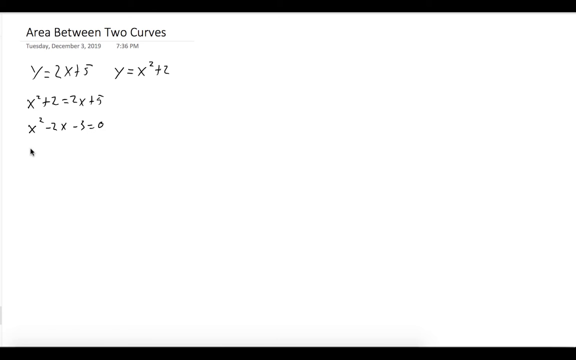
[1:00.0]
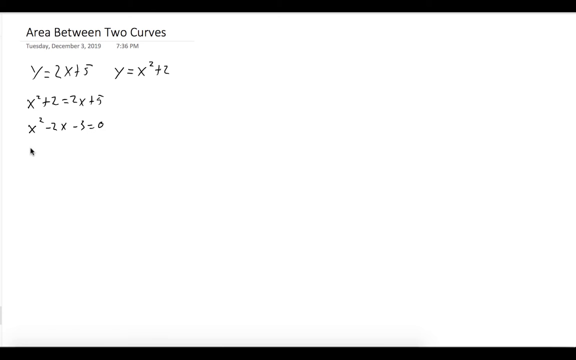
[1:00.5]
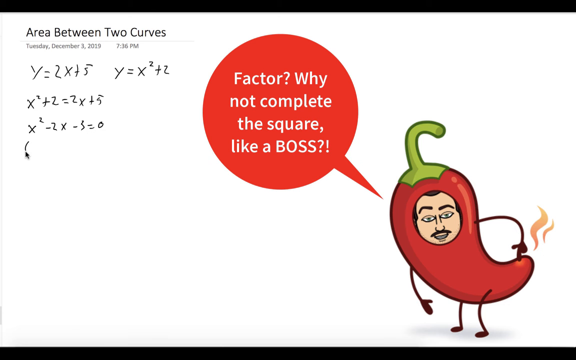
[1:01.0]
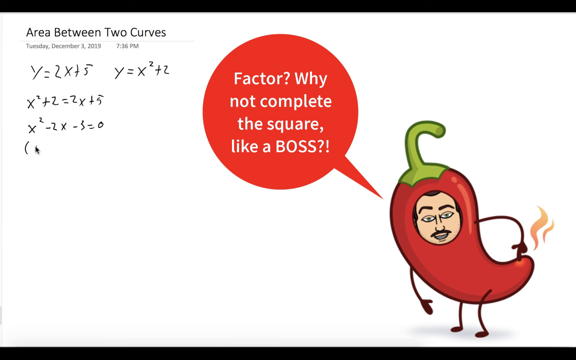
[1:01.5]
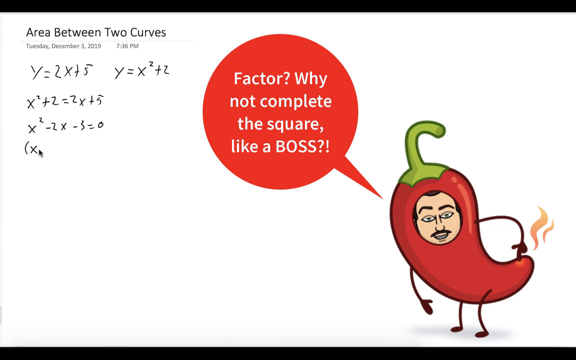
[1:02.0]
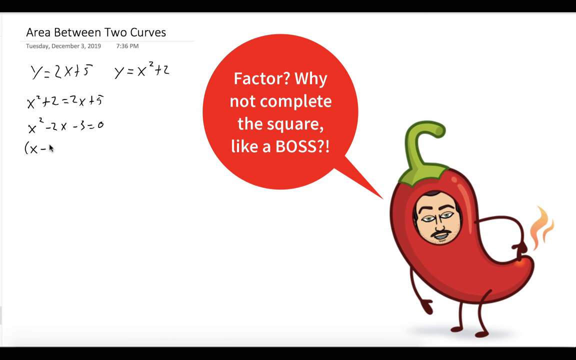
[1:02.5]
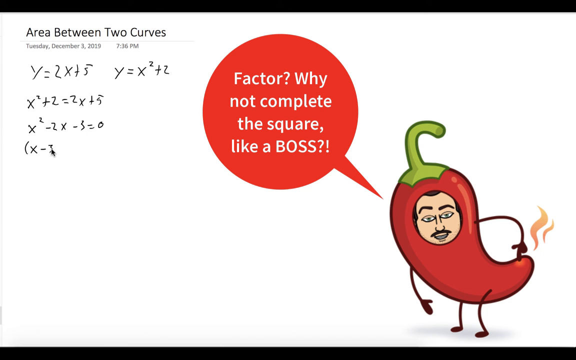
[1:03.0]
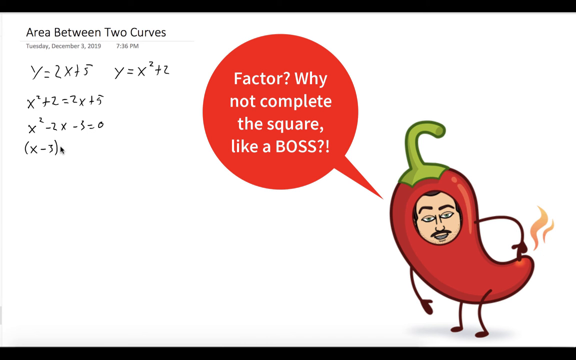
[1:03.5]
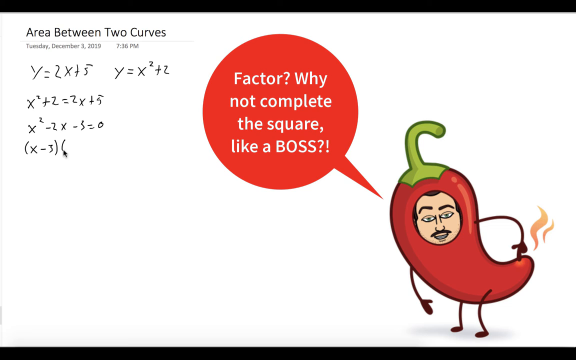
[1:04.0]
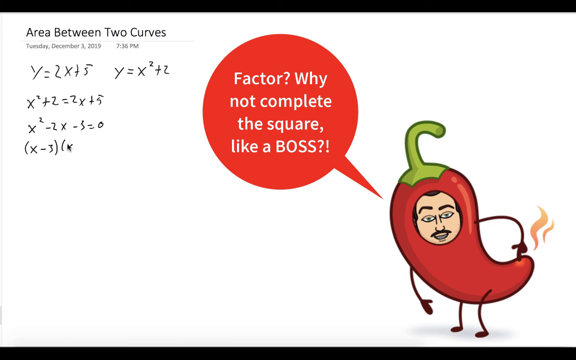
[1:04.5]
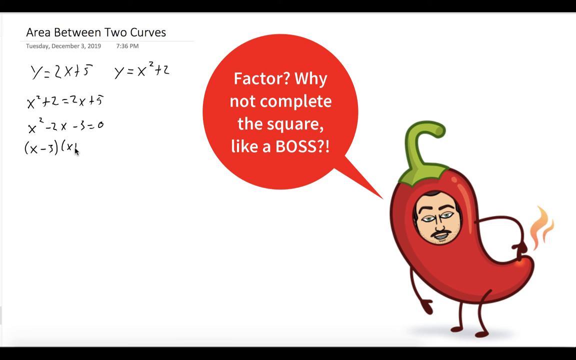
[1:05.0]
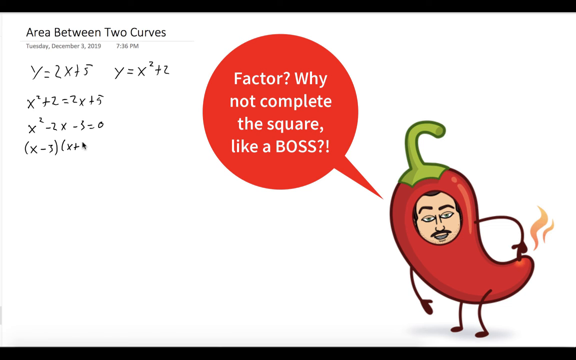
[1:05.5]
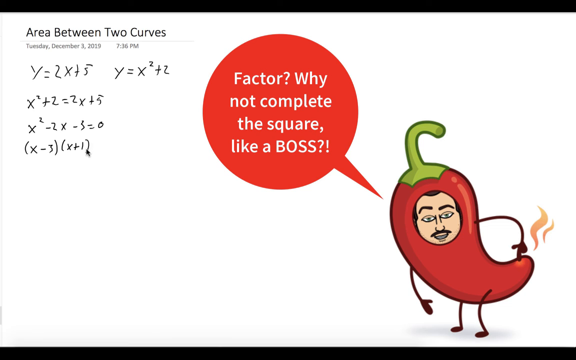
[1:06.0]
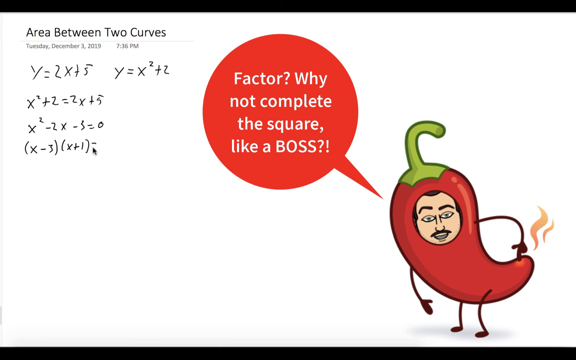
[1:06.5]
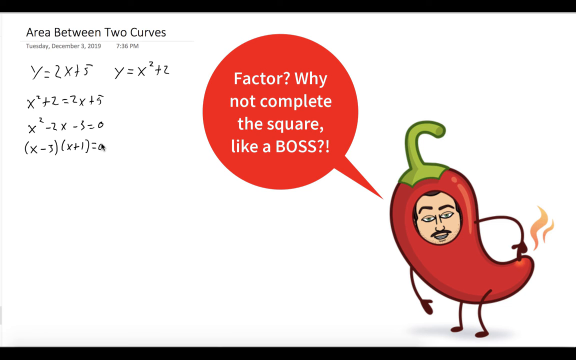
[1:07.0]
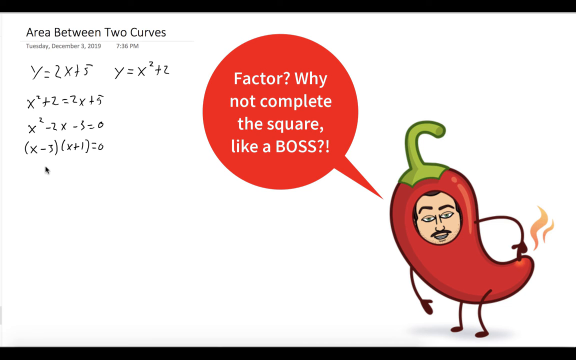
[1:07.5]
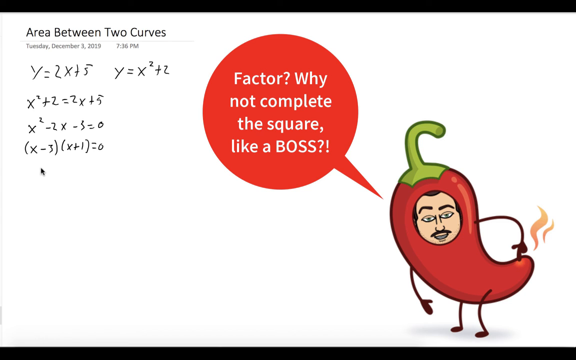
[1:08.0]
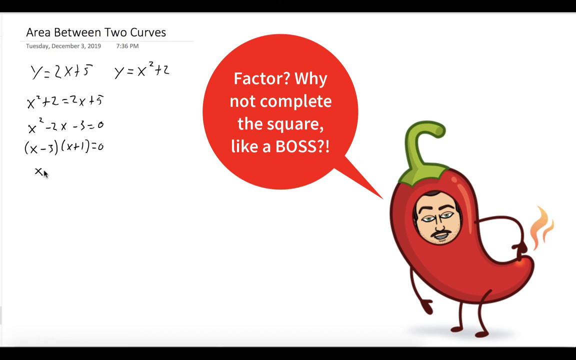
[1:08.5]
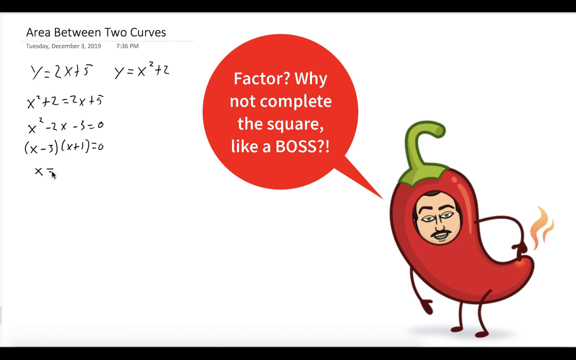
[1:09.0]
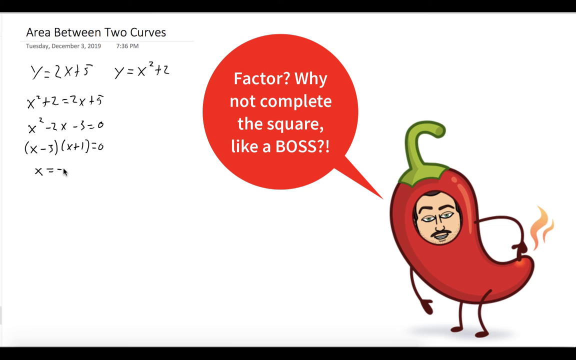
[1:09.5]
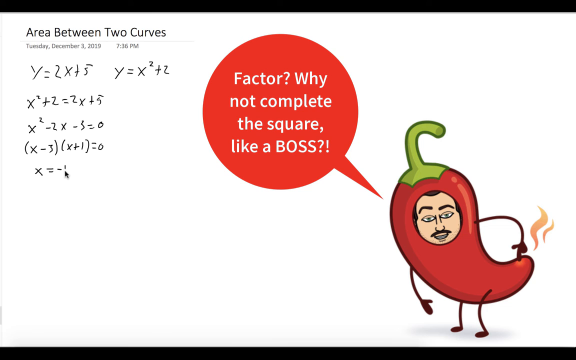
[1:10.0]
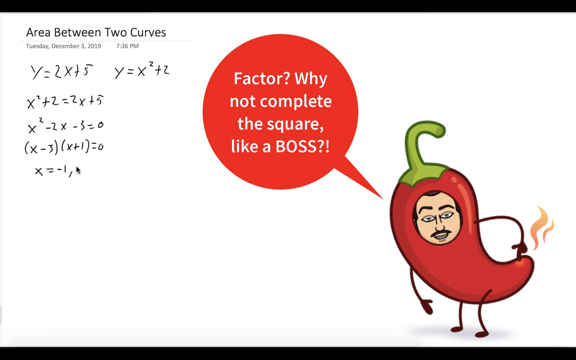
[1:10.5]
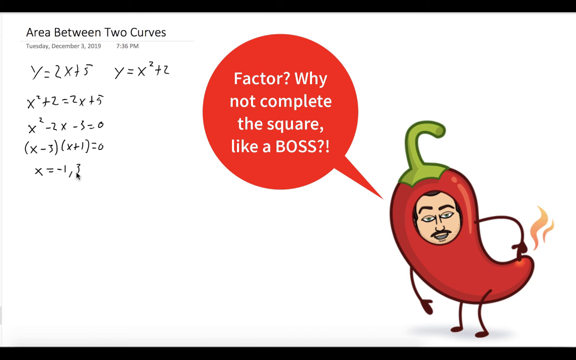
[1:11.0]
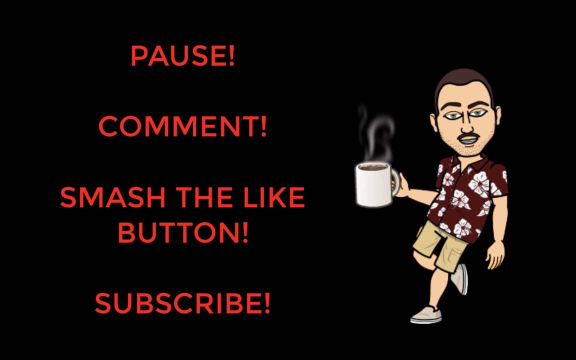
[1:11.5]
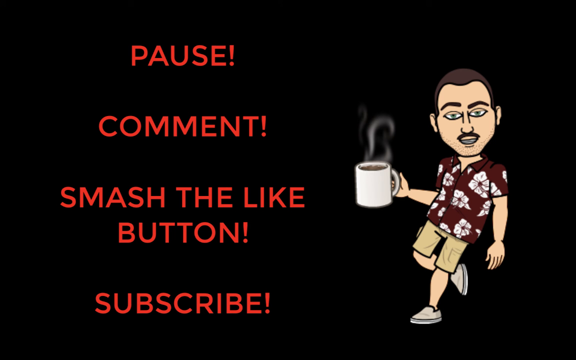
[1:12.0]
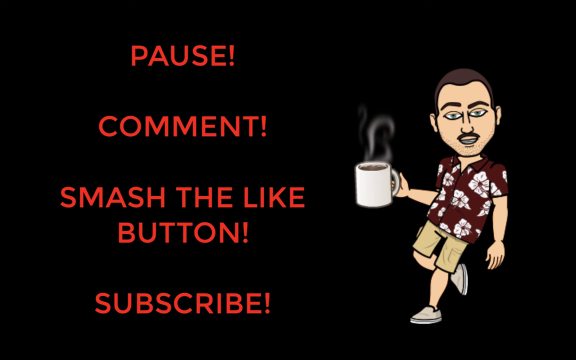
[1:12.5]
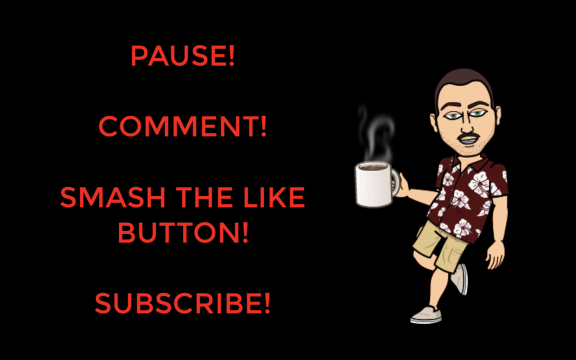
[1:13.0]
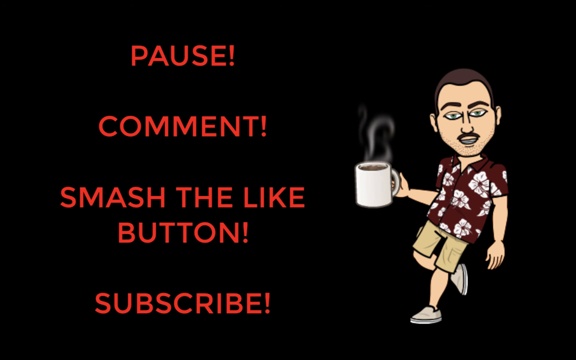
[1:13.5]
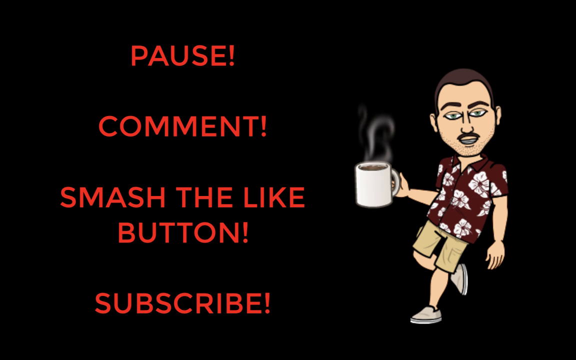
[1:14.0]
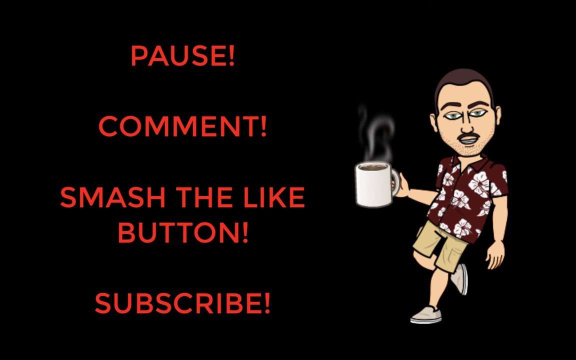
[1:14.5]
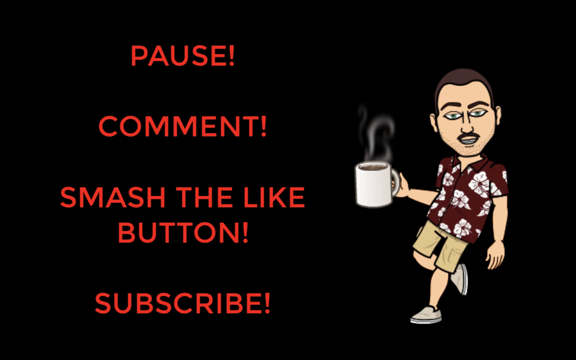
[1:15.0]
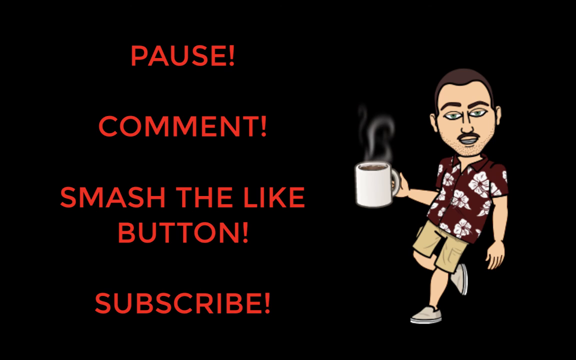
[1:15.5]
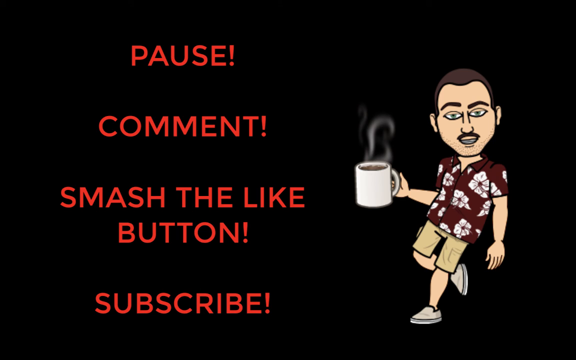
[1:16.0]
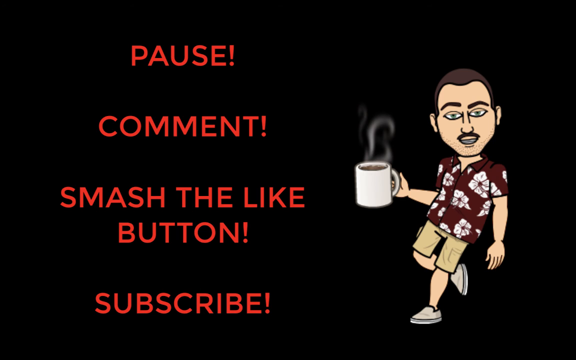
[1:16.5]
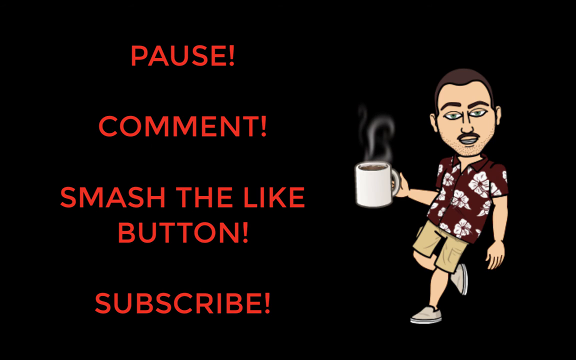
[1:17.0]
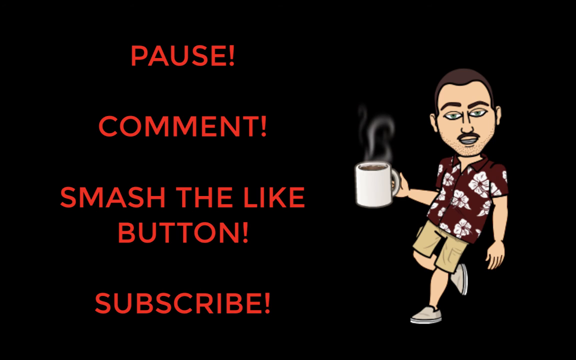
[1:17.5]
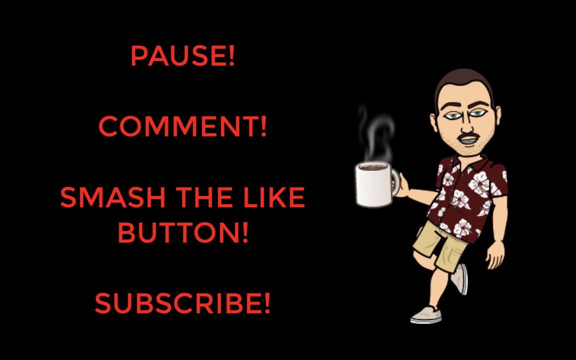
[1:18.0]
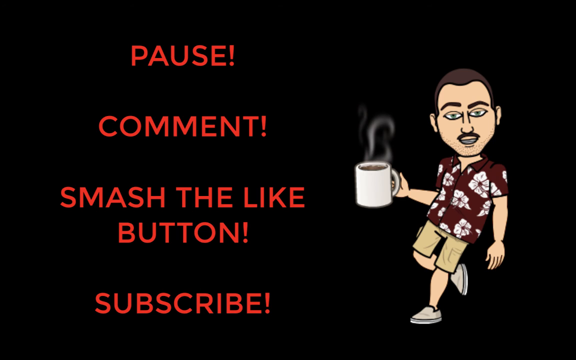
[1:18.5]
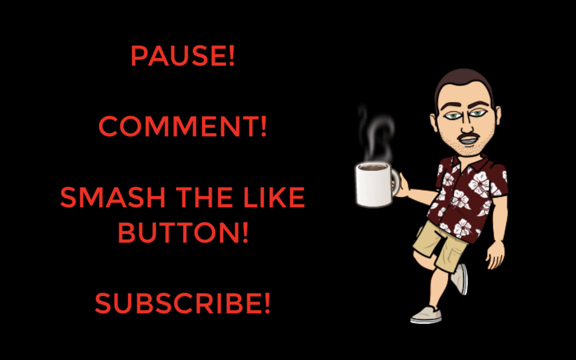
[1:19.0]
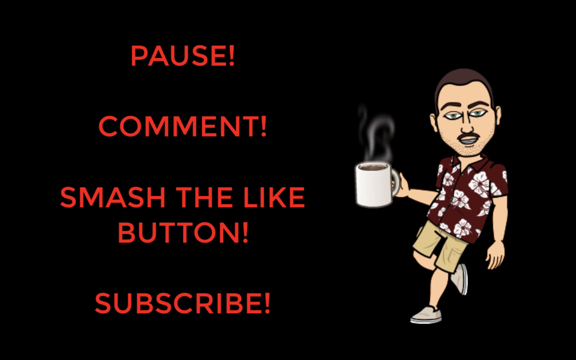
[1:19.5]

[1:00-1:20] Before the equation continues, the same Snapchat avatar appears in a chili pepper costume, saying "factor, why not complete the square like a boss?" The work then shows (x − 3)(x + 1) = 0, followed by x = −1, 3. Right after that, a screen appears that says "pause, comment, smash the like button and subscribe."